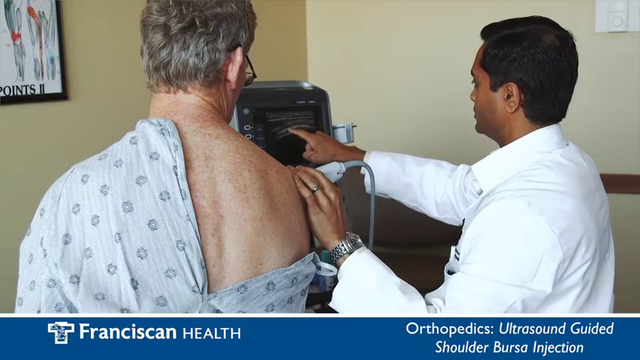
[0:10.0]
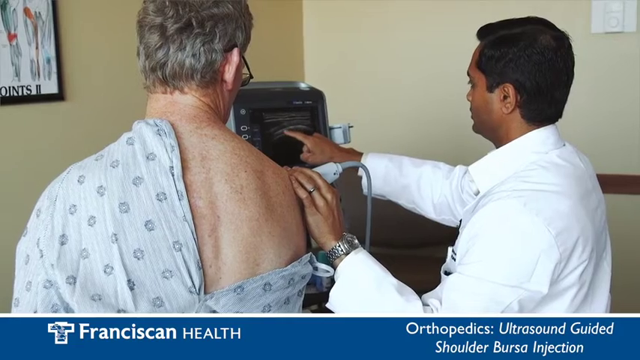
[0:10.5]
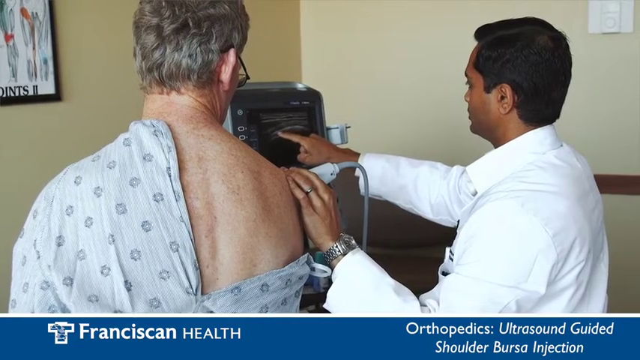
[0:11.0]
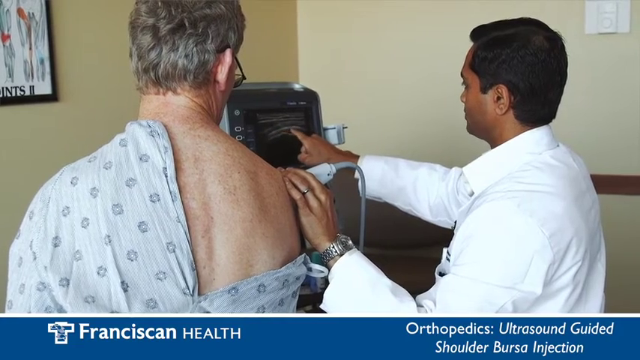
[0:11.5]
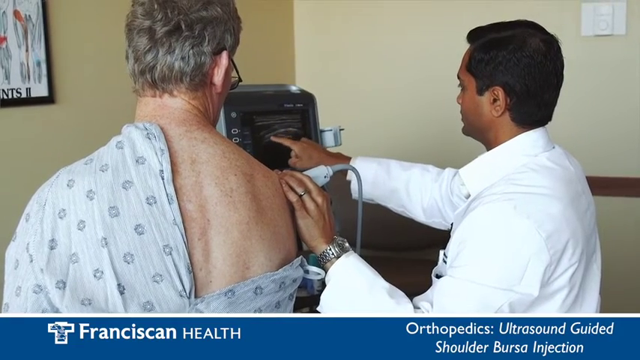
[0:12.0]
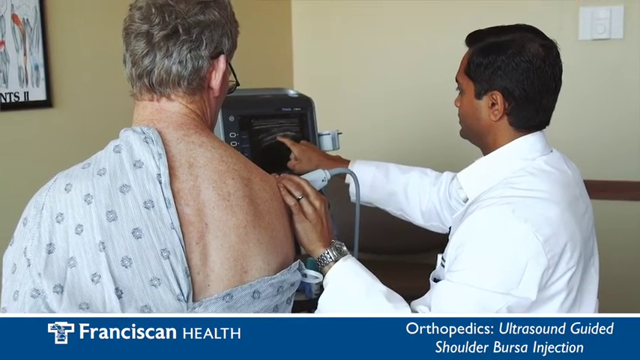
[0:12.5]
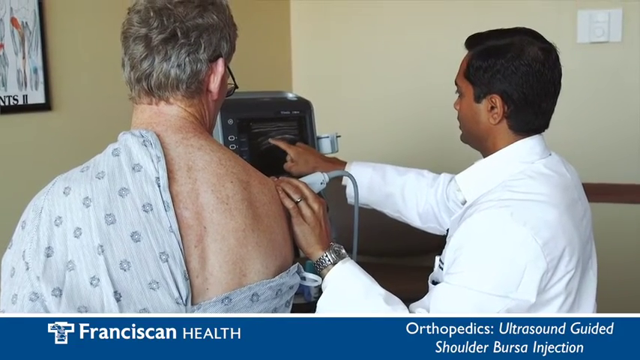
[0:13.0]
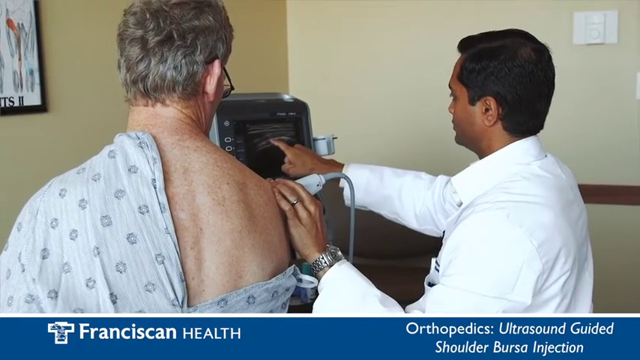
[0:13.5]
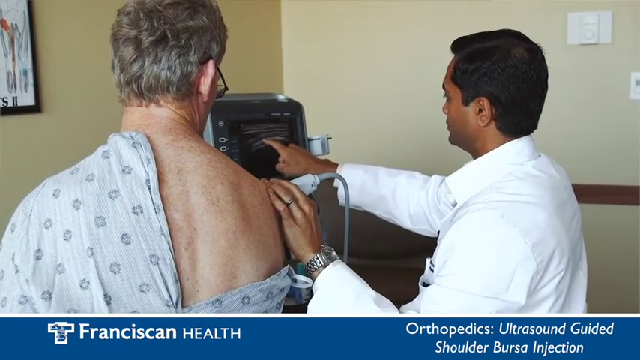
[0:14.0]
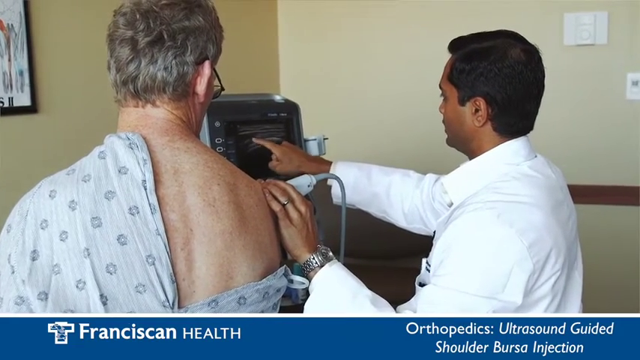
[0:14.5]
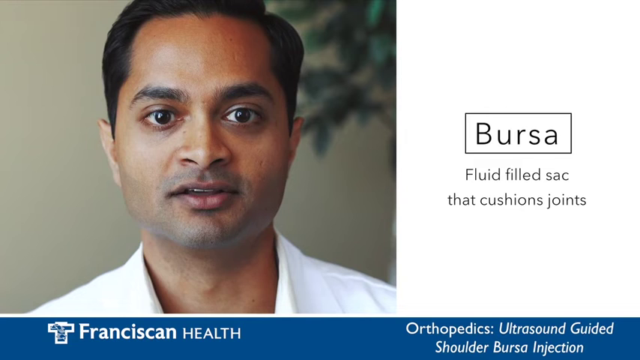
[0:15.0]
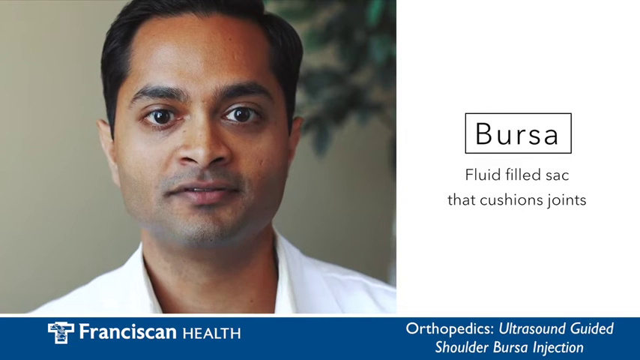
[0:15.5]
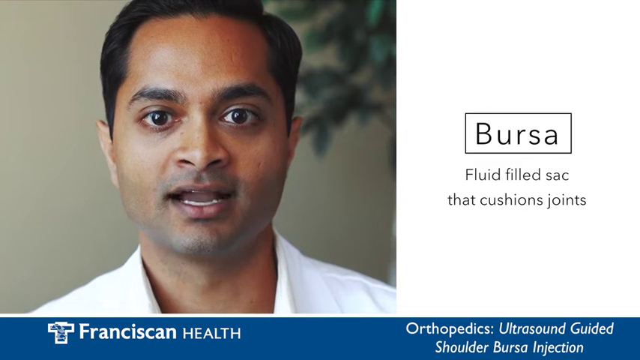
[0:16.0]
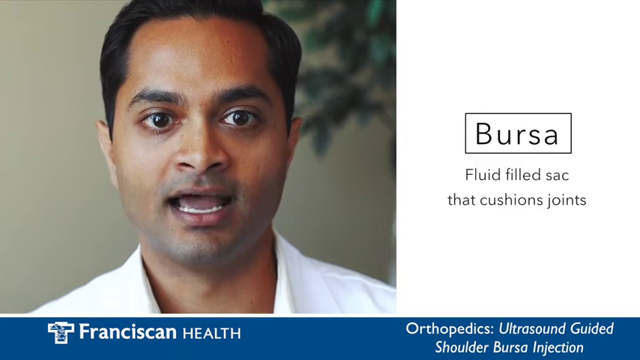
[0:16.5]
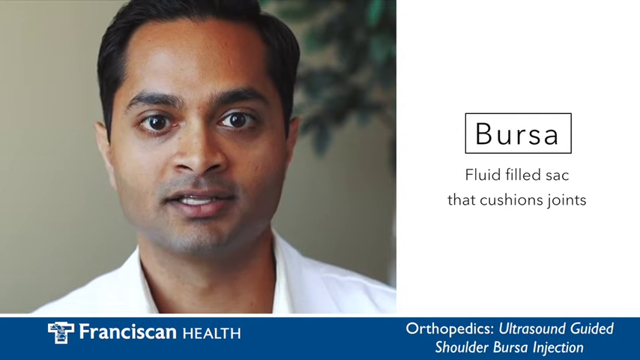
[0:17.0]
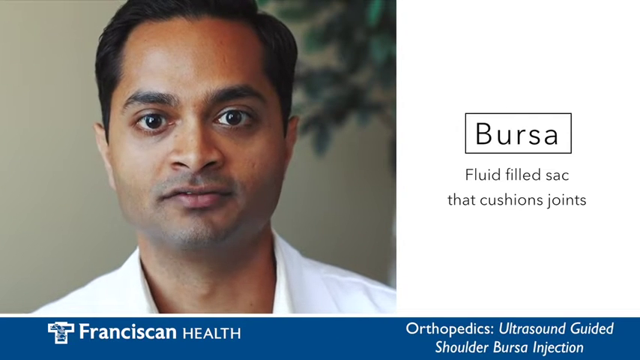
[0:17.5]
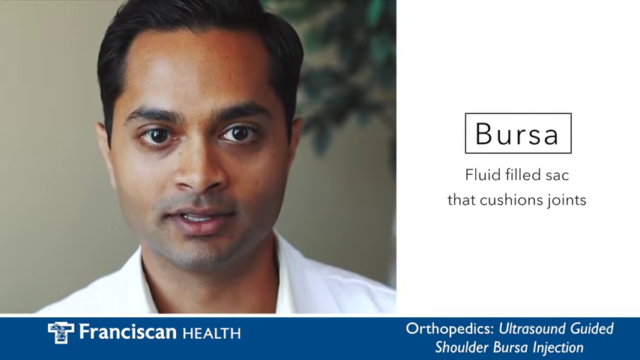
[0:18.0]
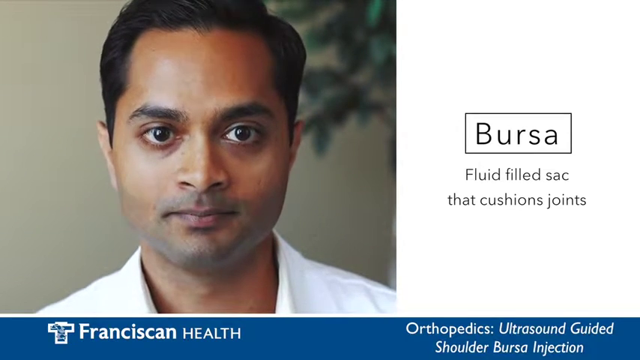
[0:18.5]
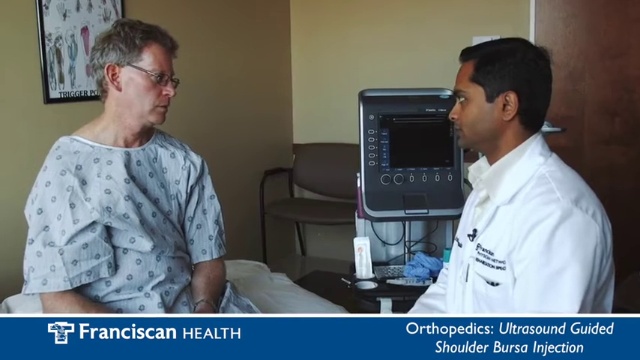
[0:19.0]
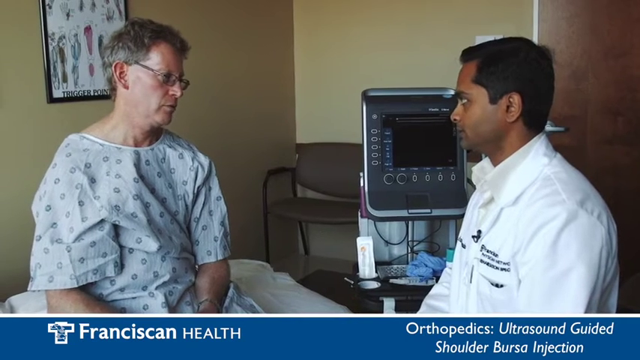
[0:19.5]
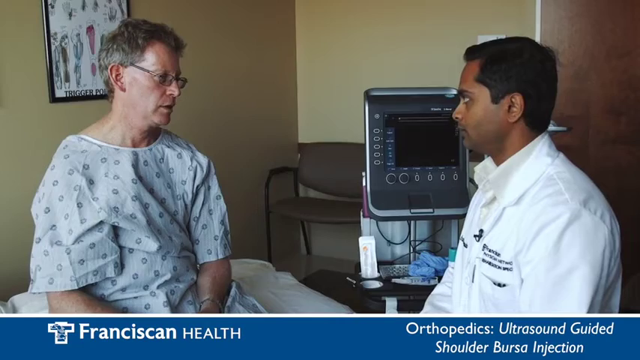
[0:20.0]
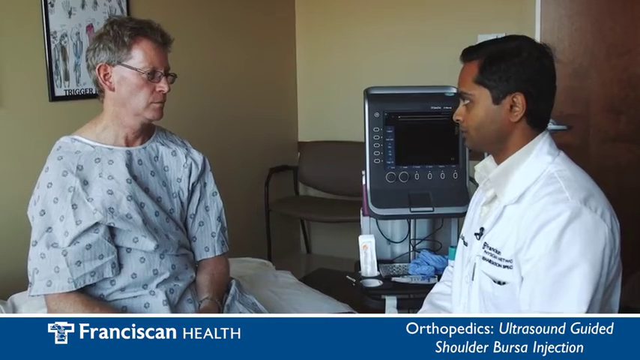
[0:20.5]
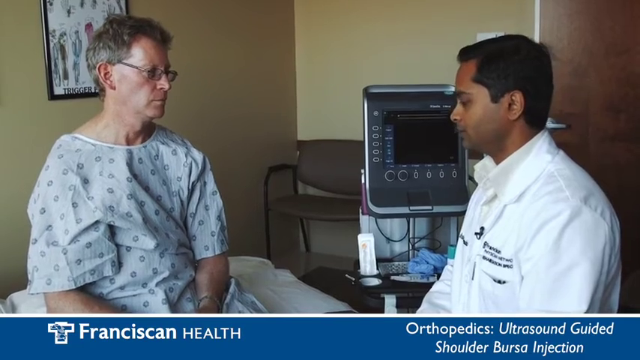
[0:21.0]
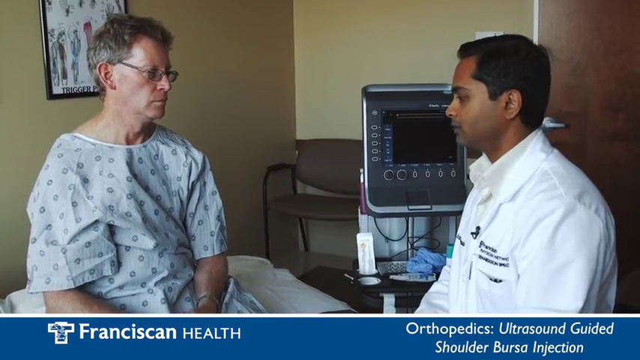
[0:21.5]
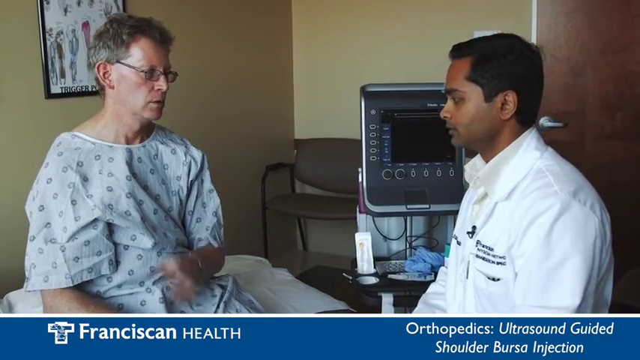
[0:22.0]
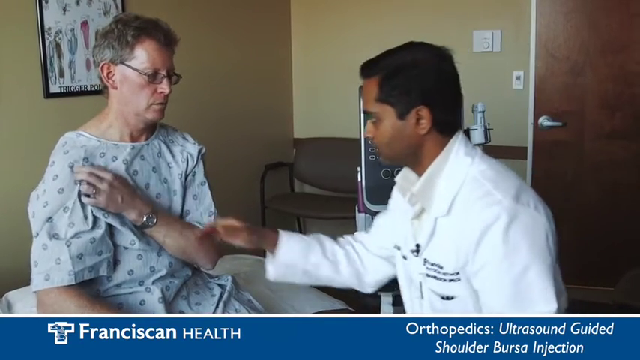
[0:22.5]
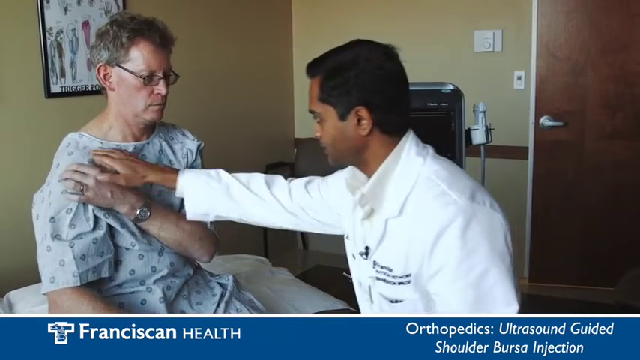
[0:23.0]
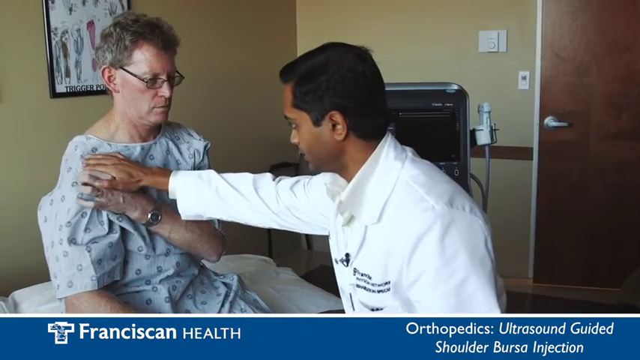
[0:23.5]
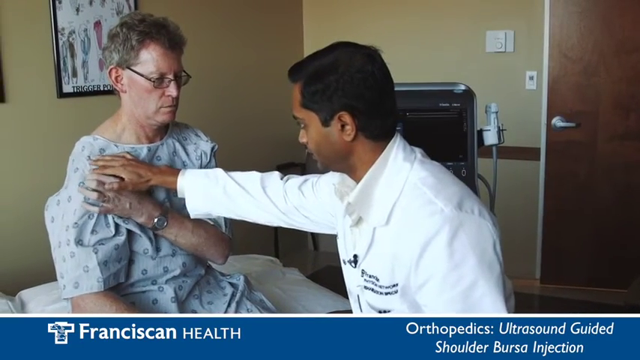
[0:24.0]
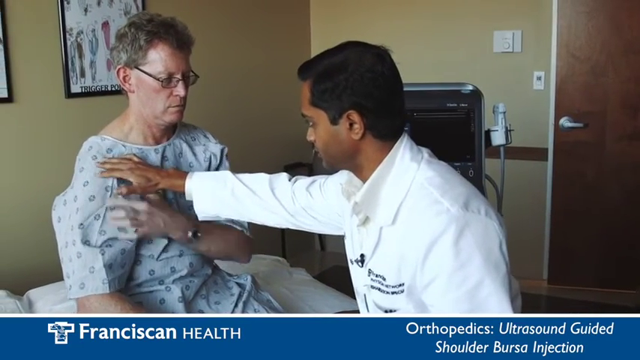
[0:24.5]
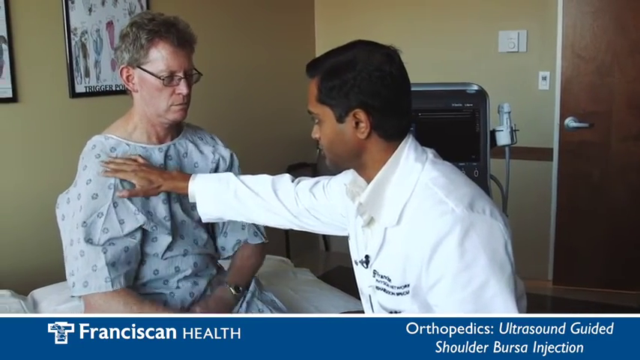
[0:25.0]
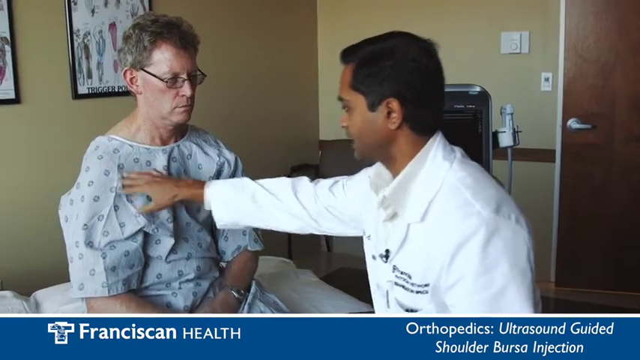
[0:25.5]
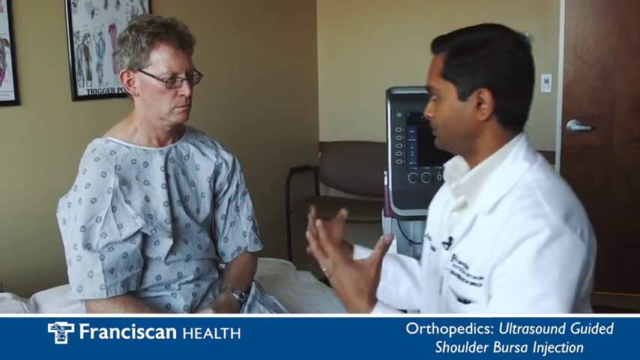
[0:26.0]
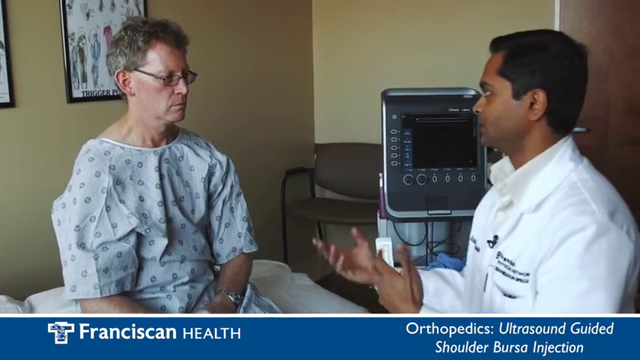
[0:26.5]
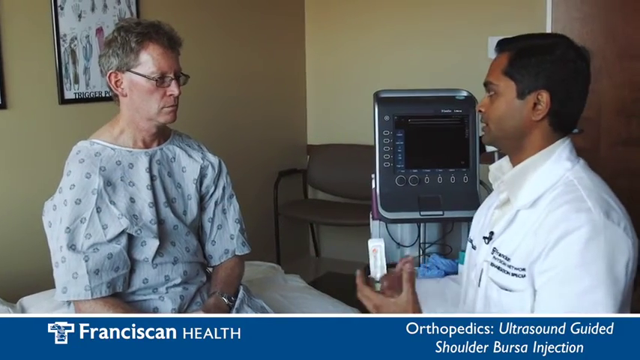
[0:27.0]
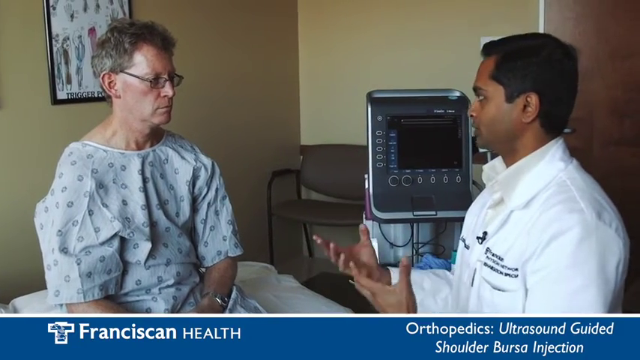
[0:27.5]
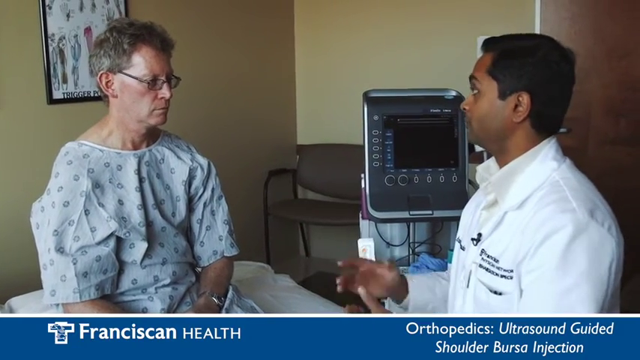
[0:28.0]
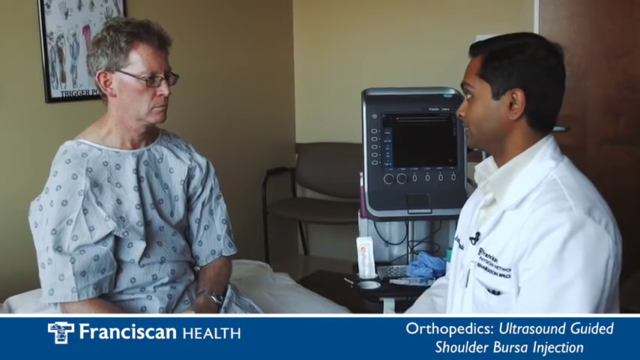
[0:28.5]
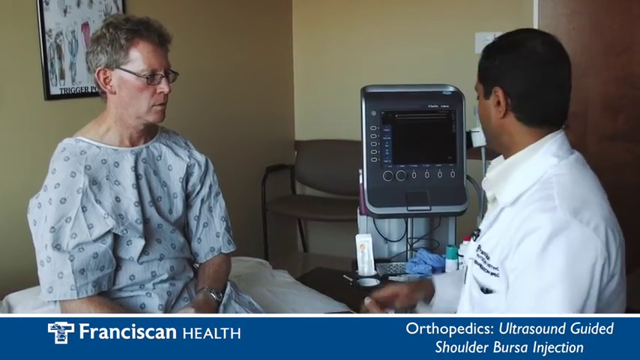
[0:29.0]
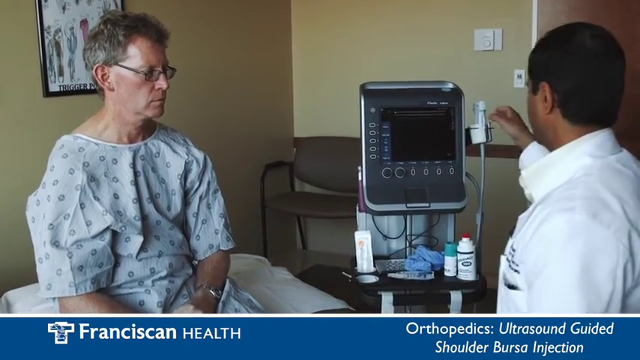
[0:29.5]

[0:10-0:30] The rehabilitation specialist, the doctor, points to a screen on a machine, hovering his finger over different parts of it while the patient on the left watches the screen. The patient appears to be sitting on a patient's bed facing the wall. The camera pans to the specialist's face alone as he talks, and a box appears on the right side of the screen with black text on a white background explaining what a bursa is, describing it as a fluid-filled sack that cushions the joint. The shot returns to the doctor and patient; the doctor nods as the patient talks and kind of indicates where his injury is on his right shoulder, and the patient nods and listens as they talk intently. The patient wears a white nightgown with gray floral or generic patterns. In the background are a brown chair and a poster of what looks to be anatomy, perhaps of an arm, and some gloves are on the table of the machine. As the patient tells the doctor about his shoulder, the doctor touches it.